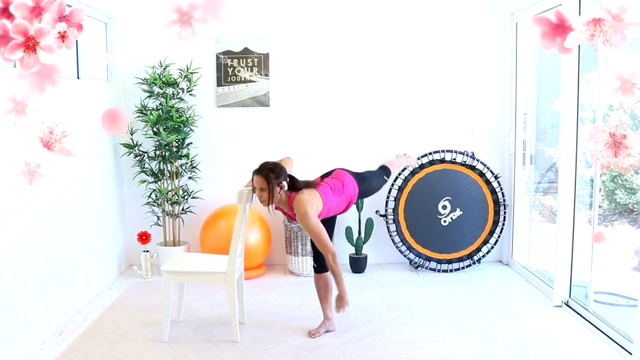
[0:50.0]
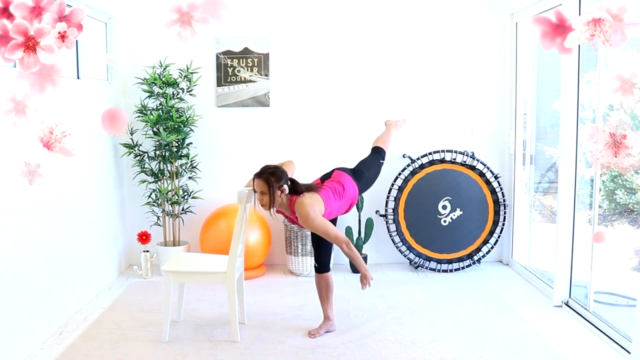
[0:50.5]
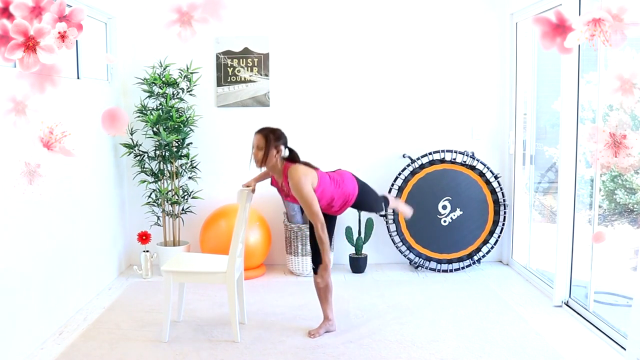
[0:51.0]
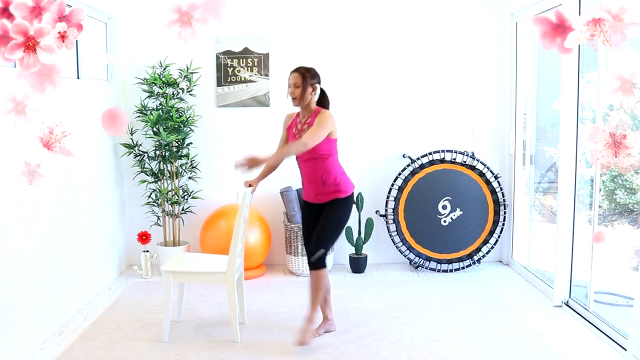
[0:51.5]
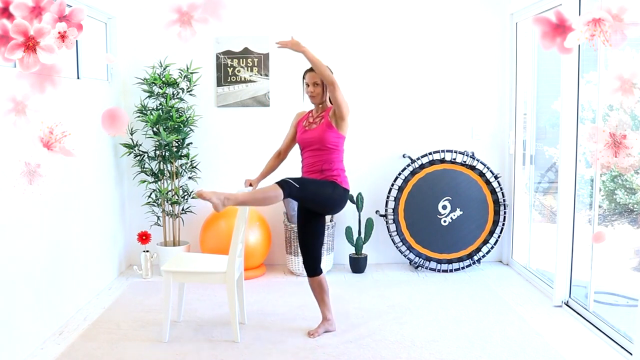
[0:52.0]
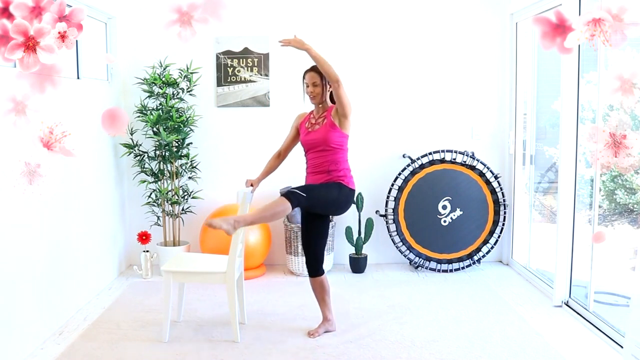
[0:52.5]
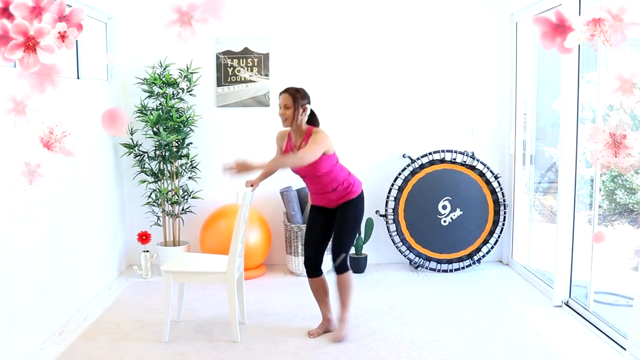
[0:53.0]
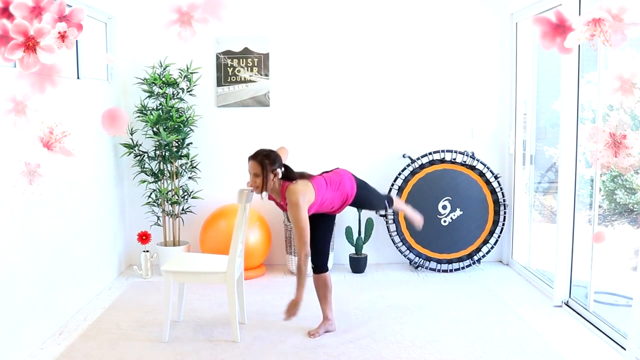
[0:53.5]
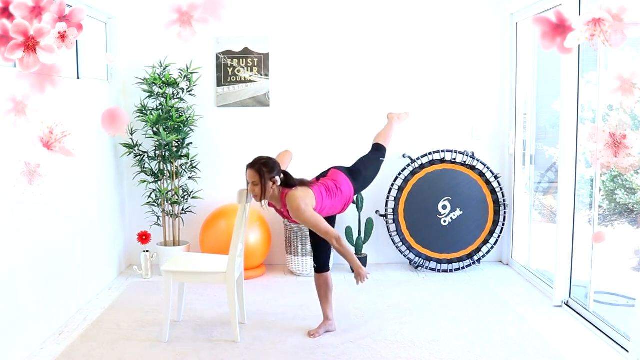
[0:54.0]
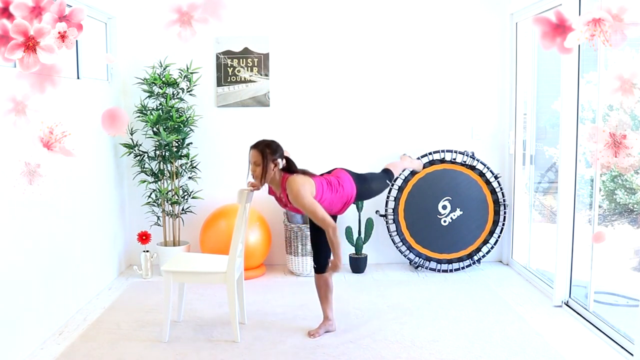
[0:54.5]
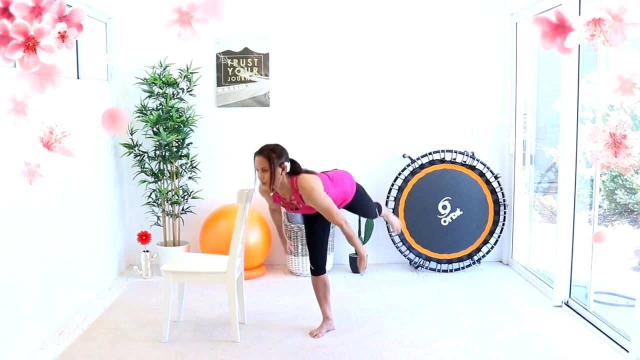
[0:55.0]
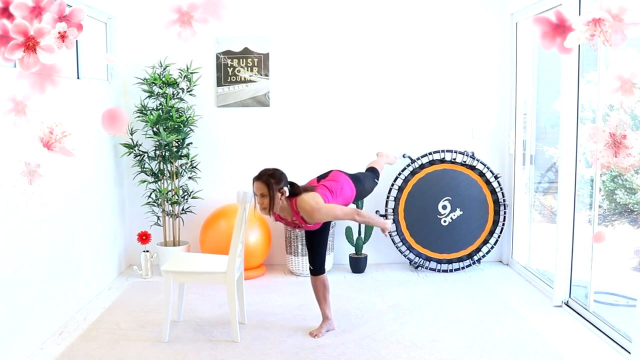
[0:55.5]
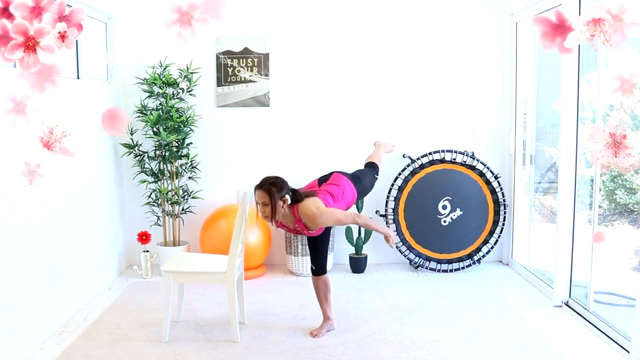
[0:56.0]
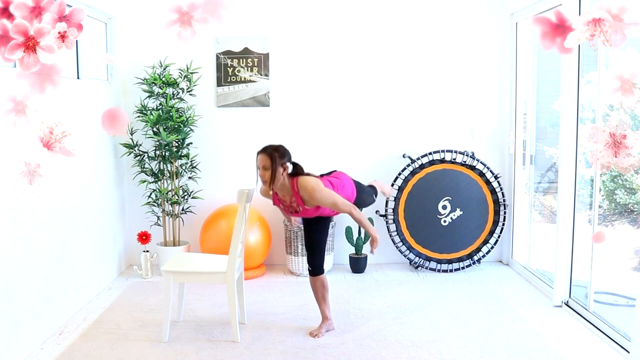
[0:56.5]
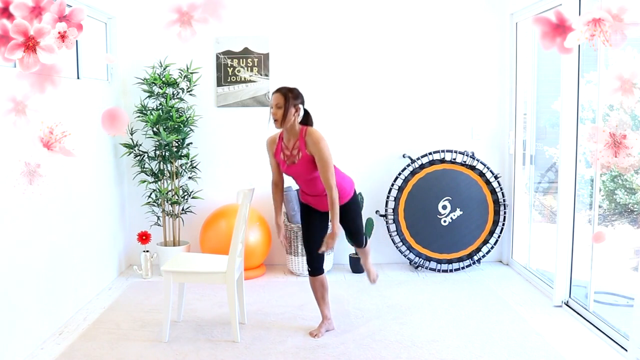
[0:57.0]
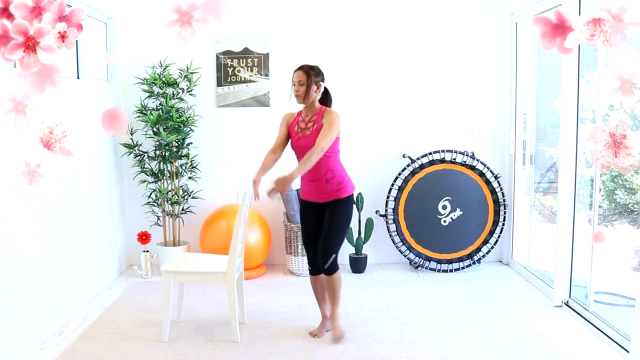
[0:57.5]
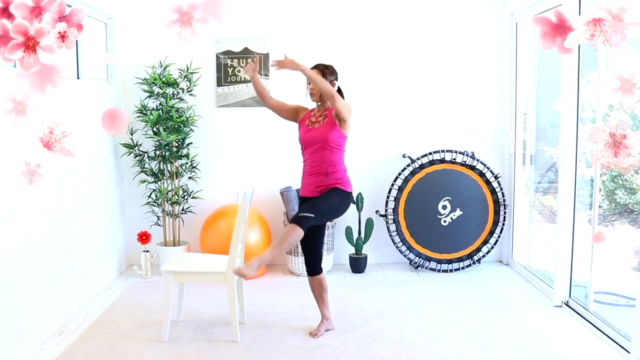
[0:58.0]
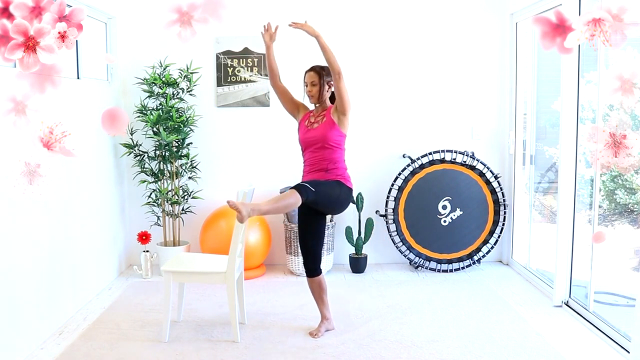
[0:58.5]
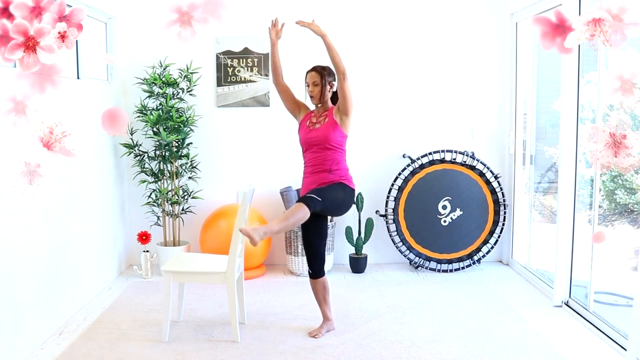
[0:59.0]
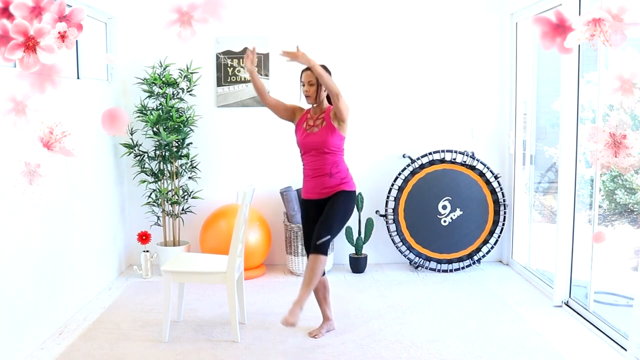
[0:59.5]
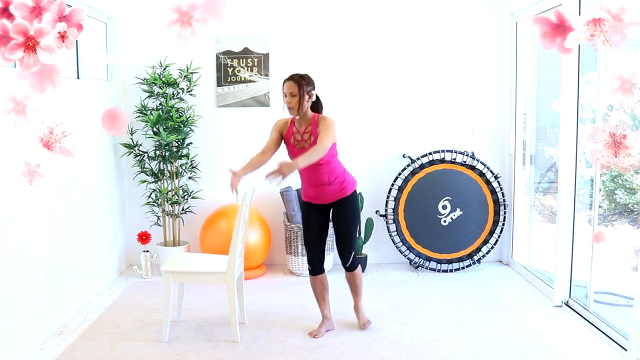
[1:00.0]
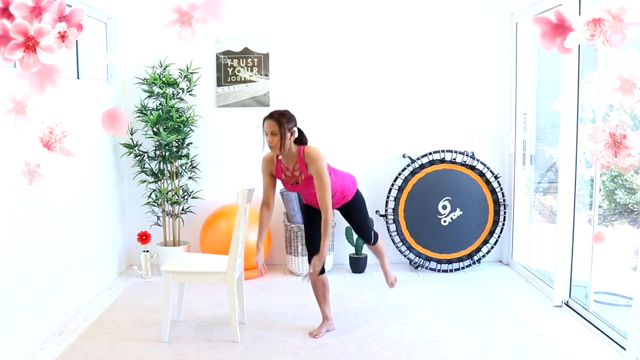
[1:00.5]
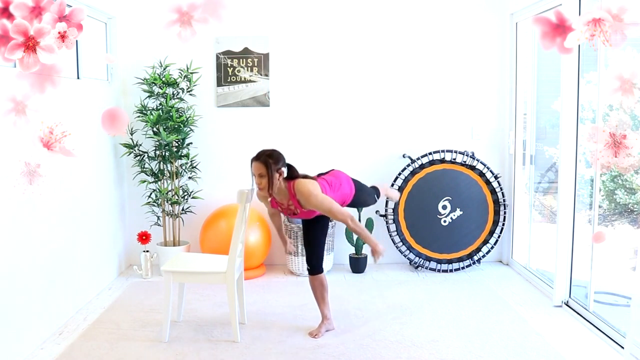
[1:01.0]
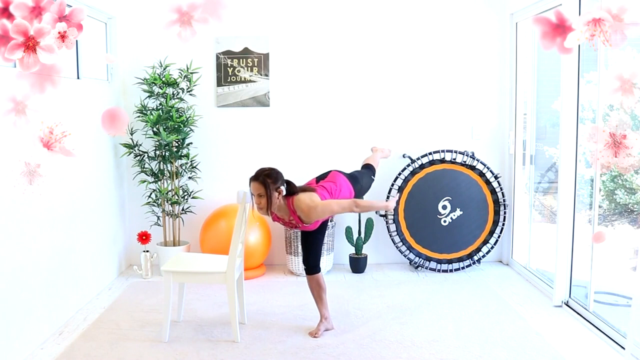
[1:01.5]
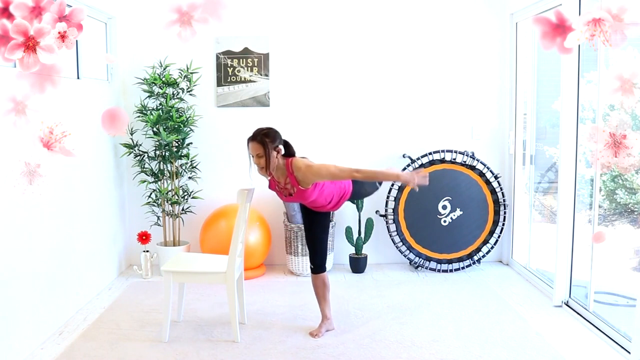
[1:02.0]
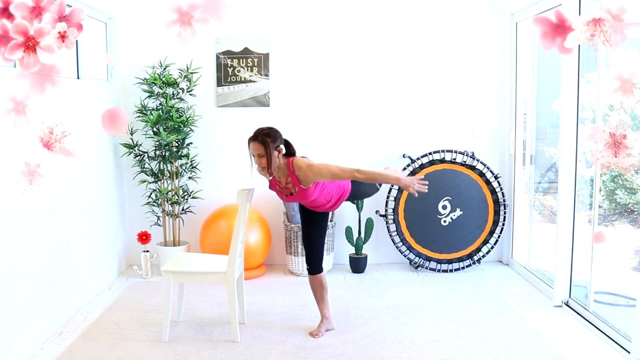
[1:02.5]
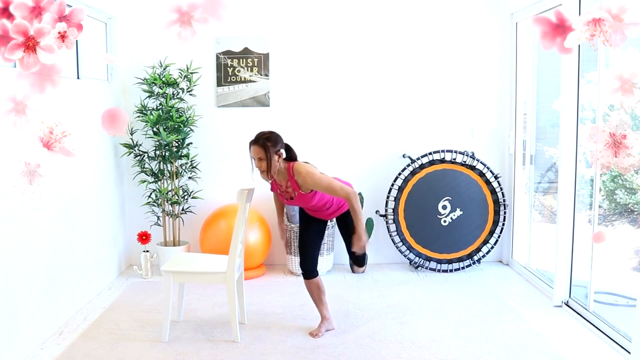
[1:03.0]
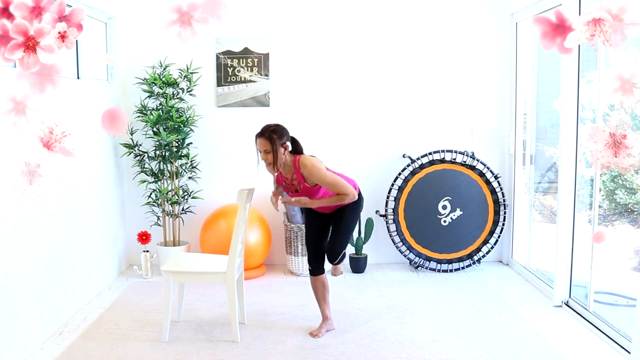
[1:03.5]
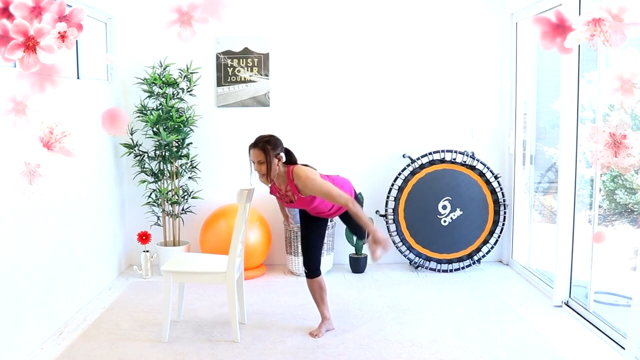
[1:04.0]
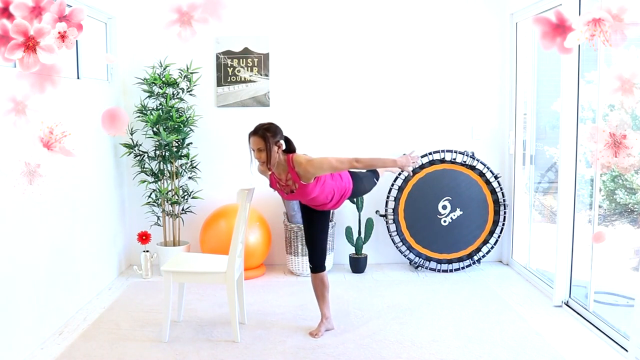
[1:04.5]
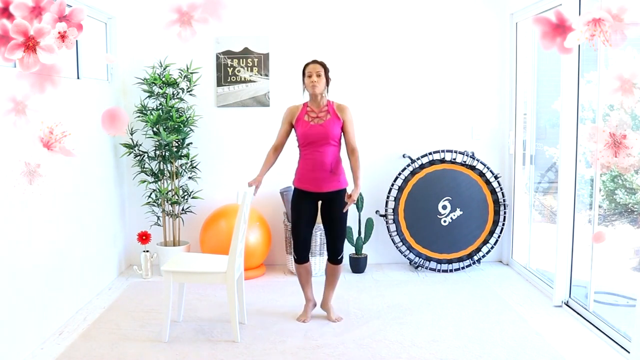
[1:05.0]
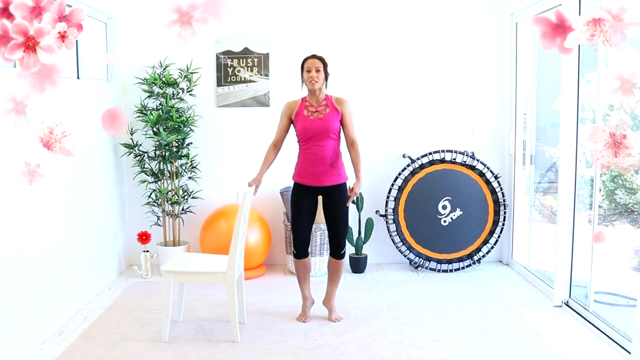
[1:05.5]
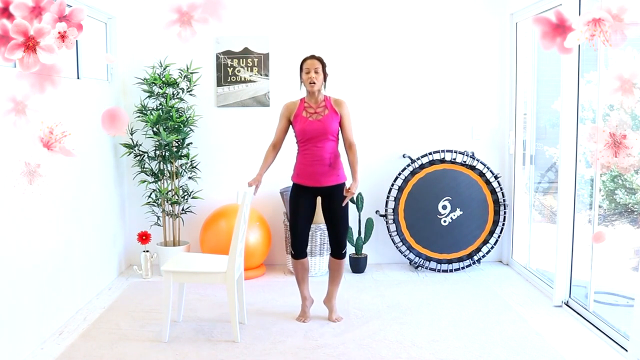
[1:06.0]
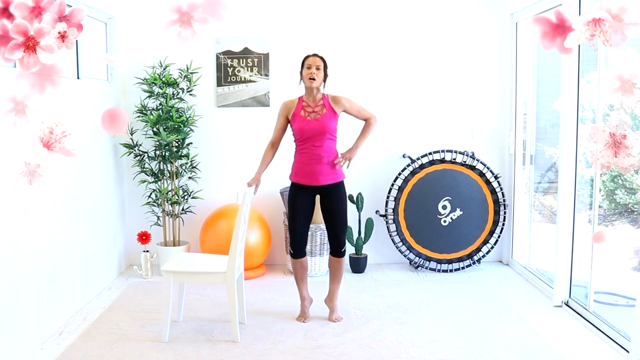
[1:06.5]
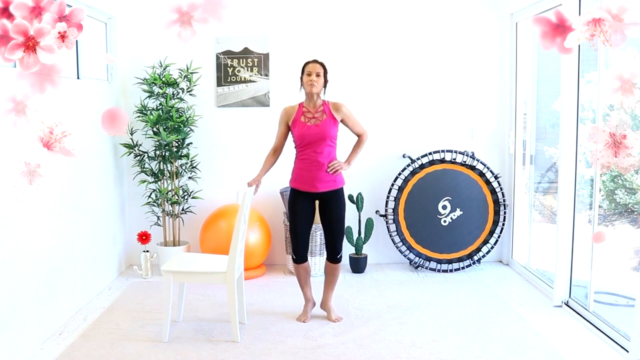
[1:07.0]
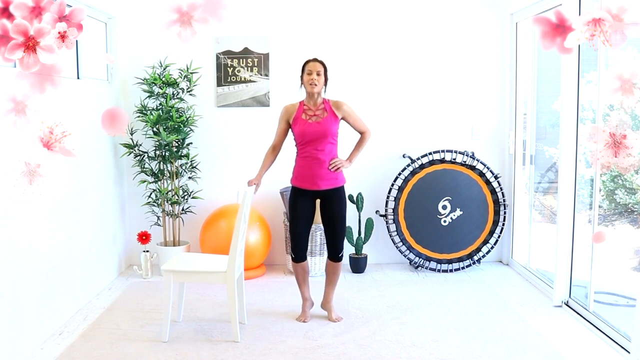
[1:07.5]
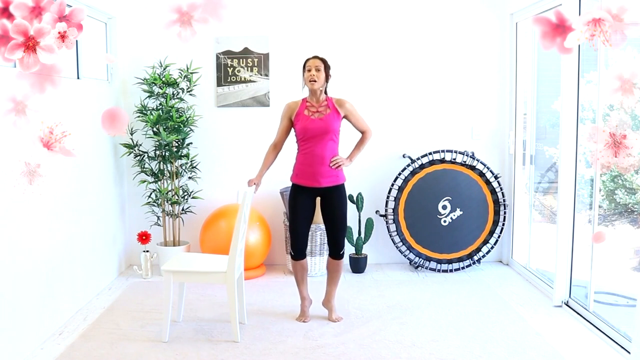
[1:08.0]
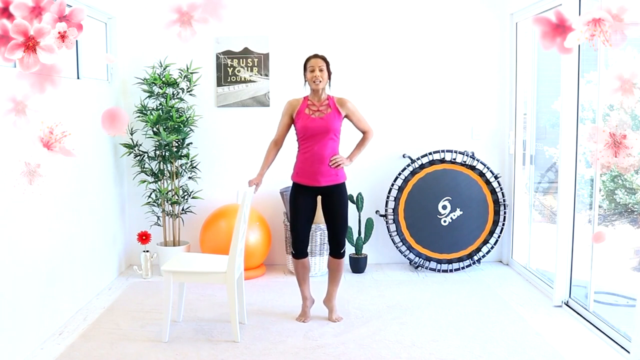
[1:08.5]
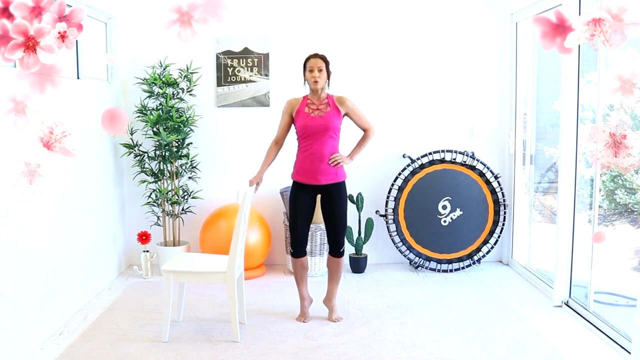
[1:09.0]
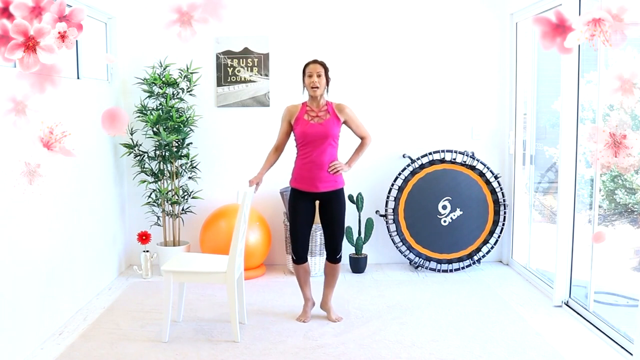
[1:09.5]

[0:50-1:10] The woman in the pink top and black sweatpants continues her aerobic-type exercises. Behind her is a trampoline with some writing on it, a gray circle in the center and an orange circle around that, almost like a halo. Animated flowers appear in the upper left-hand corner and the upper right-hand corner by the sliding glass door. A sign reads "trust your", followed by something that cannot be read. There are white walls in the back, an orange rubber exercise ball in the back, a cactus plant behind her, an orange or green plant on the left of the screen, and a white chair she uses for balance during some of the exercises and stretches. Much of the background is white wall, and the floor is white. She is barefoot with a ponytail. She does more stretches, swinging her left foot and bouncing on one foot, does a swing and stretch, bends over, does balancing moves with her arms and some toe stretches, and moves the white chair to the right side of the screen.